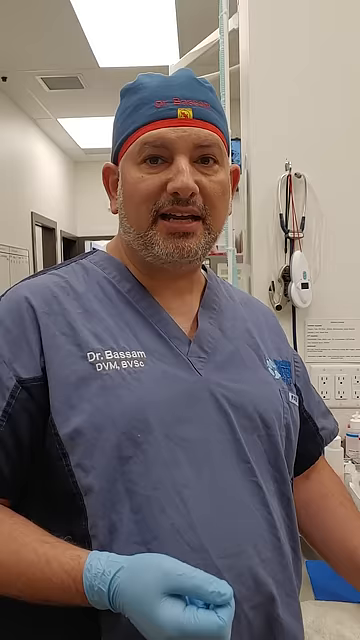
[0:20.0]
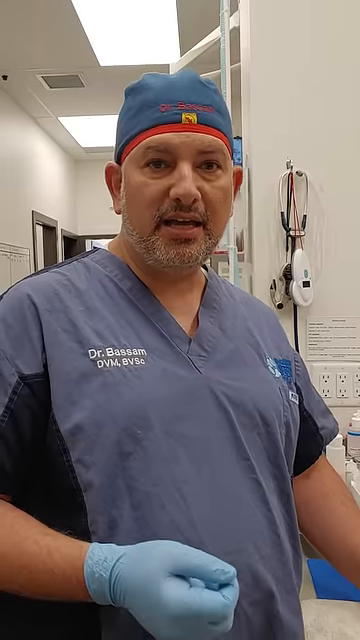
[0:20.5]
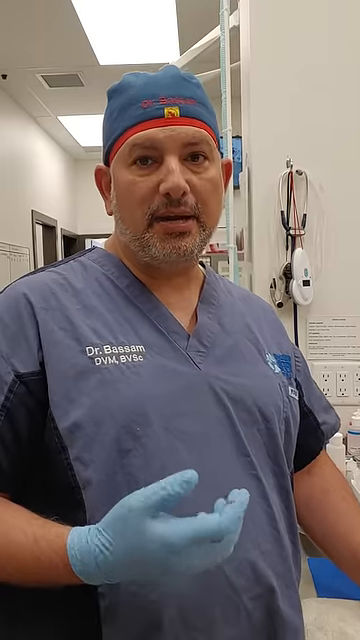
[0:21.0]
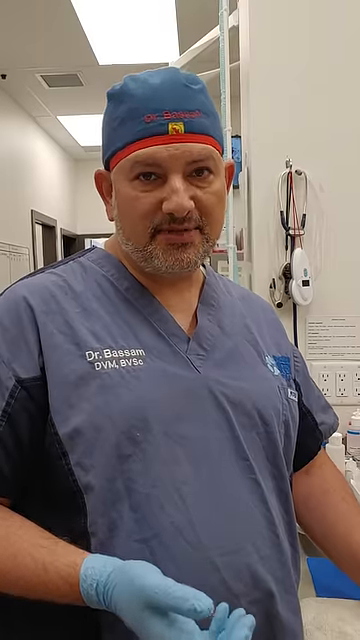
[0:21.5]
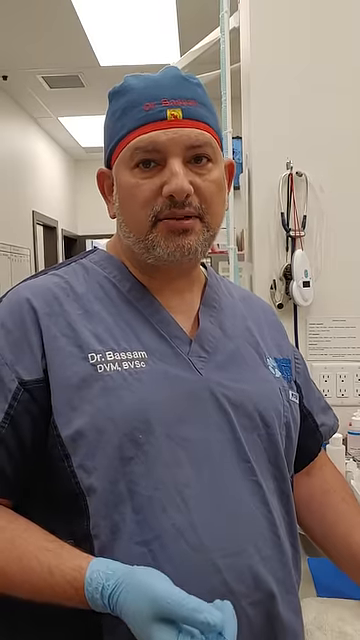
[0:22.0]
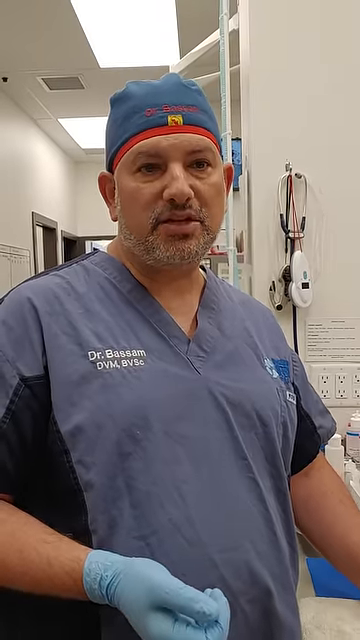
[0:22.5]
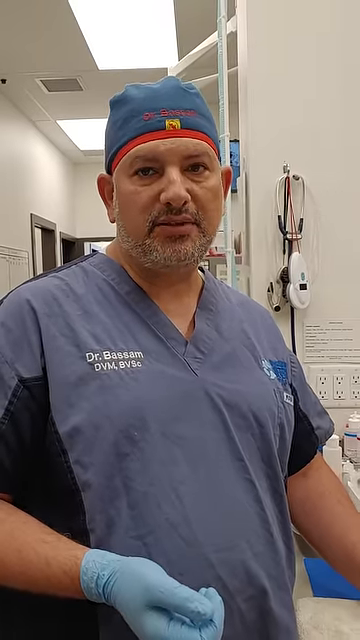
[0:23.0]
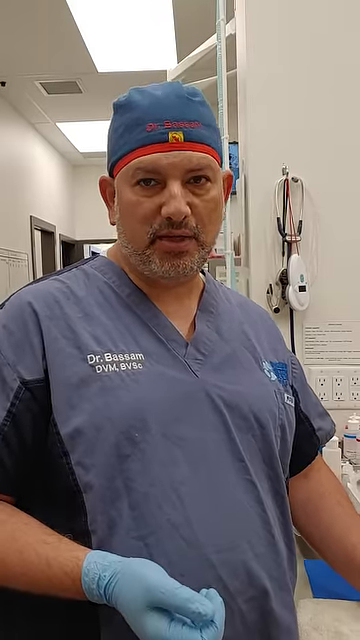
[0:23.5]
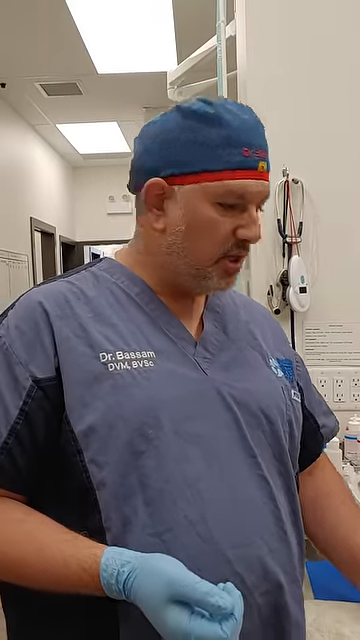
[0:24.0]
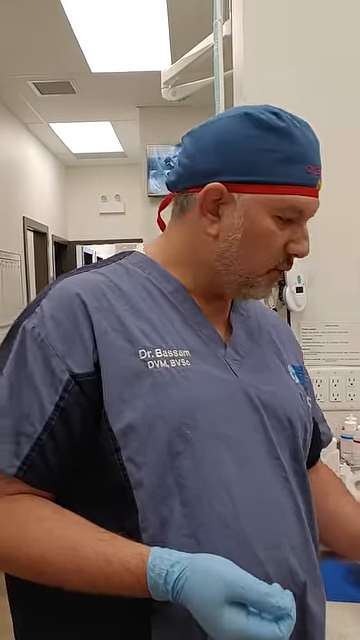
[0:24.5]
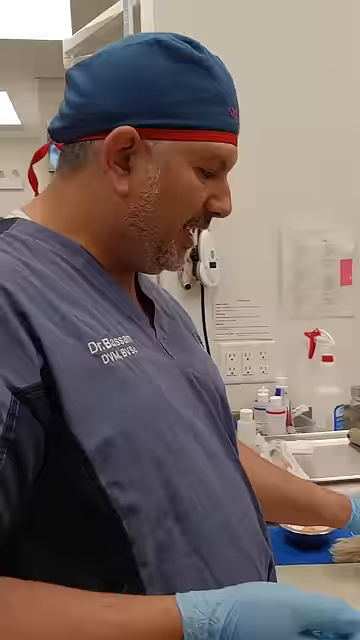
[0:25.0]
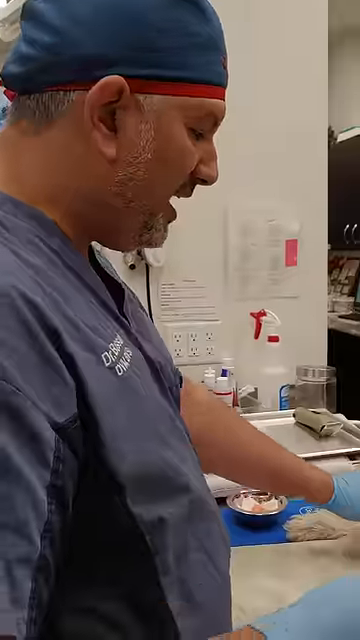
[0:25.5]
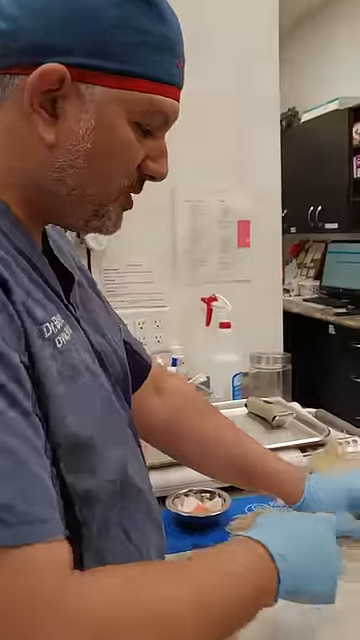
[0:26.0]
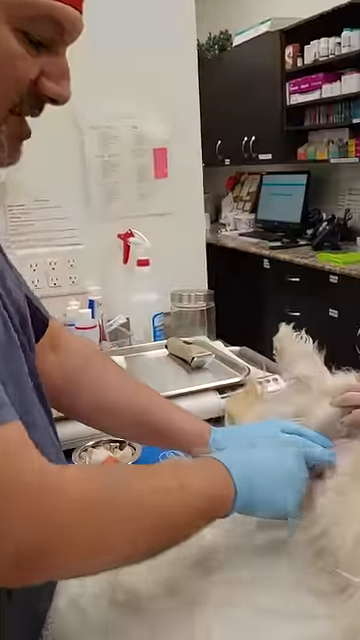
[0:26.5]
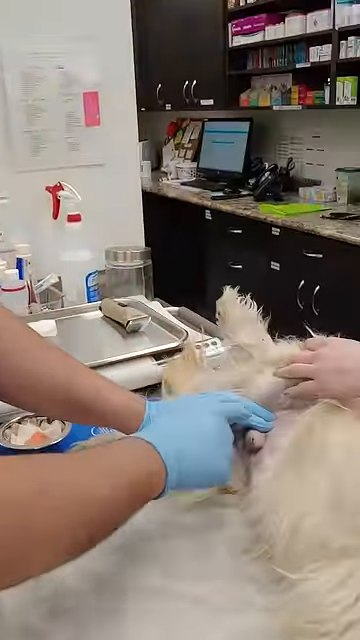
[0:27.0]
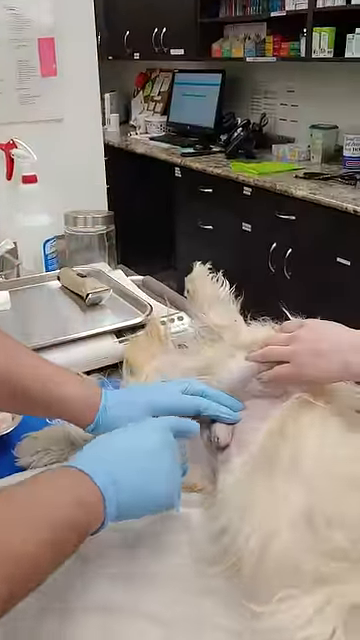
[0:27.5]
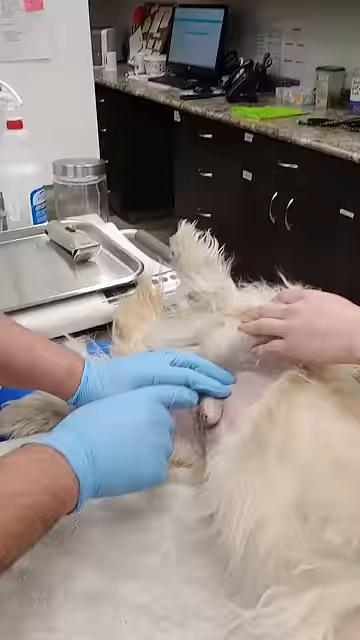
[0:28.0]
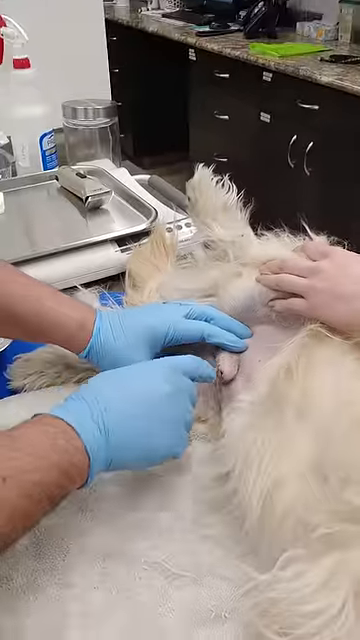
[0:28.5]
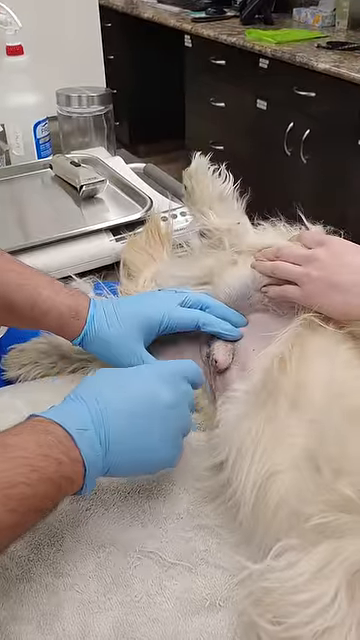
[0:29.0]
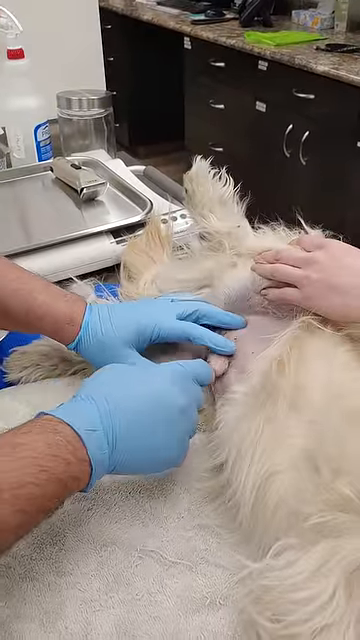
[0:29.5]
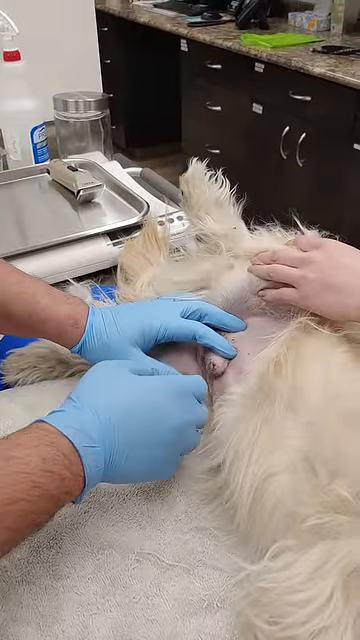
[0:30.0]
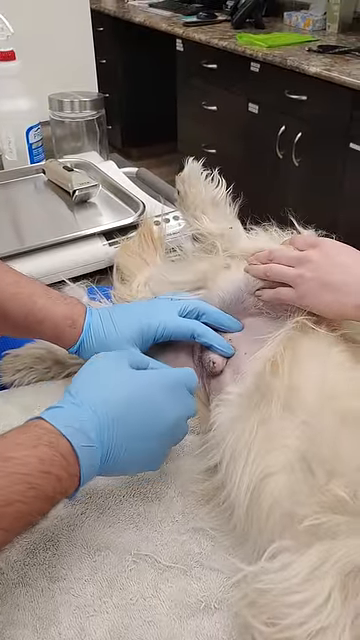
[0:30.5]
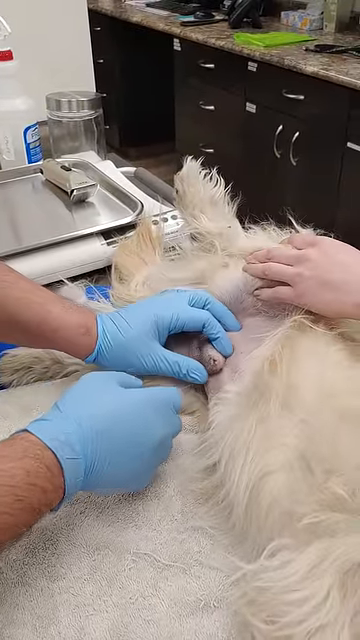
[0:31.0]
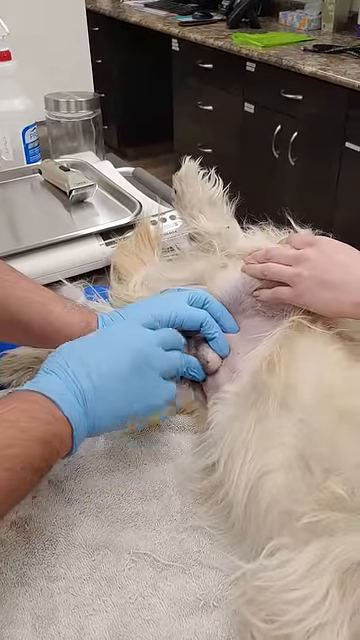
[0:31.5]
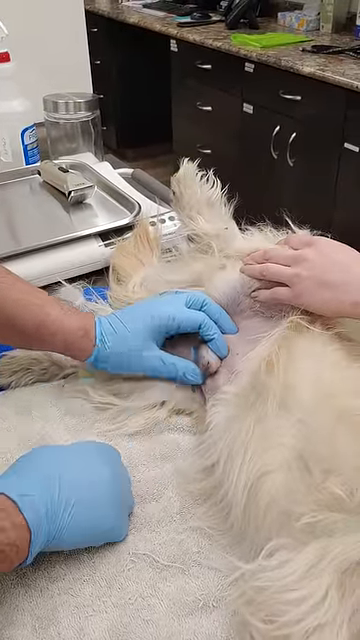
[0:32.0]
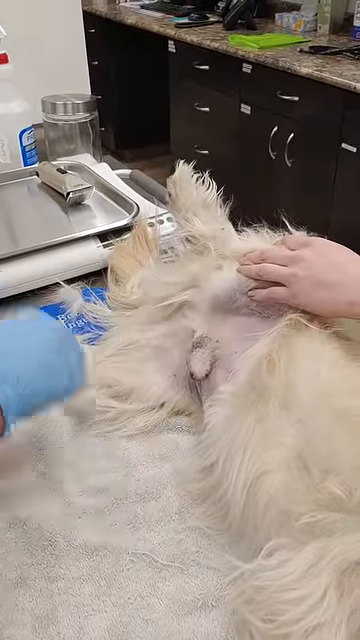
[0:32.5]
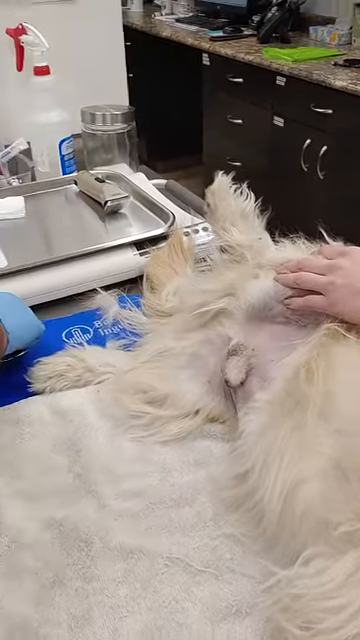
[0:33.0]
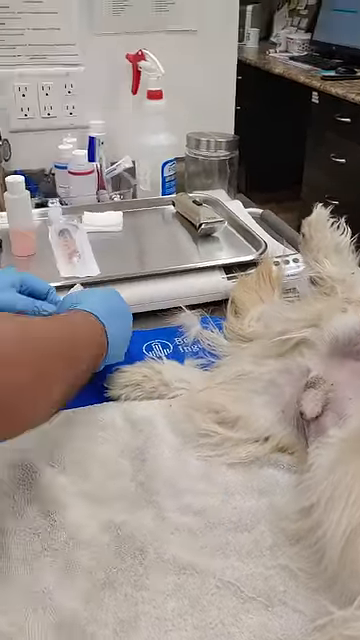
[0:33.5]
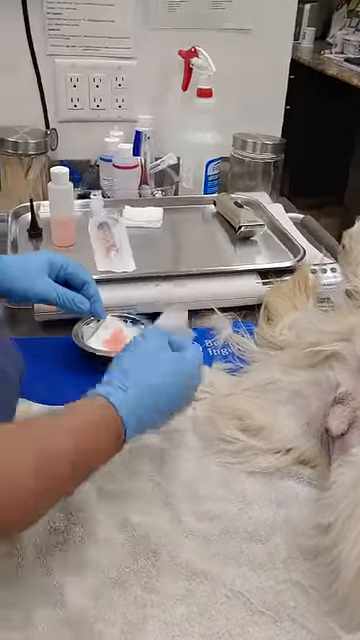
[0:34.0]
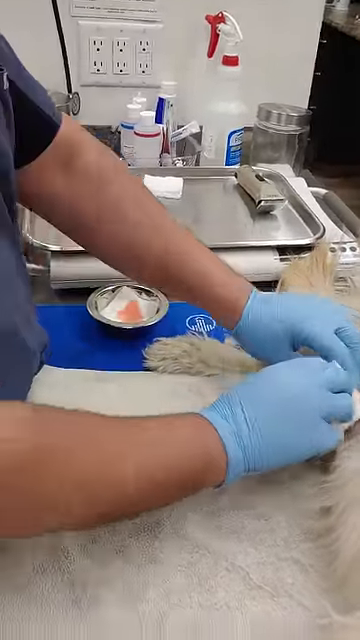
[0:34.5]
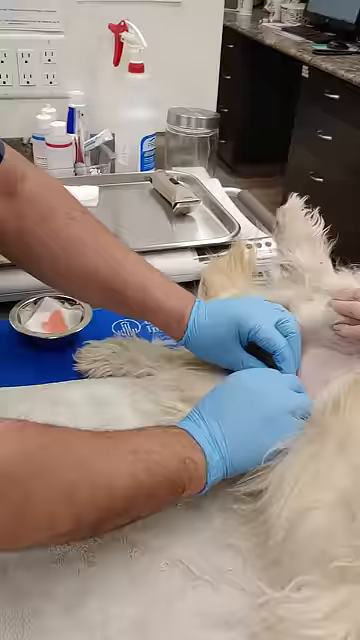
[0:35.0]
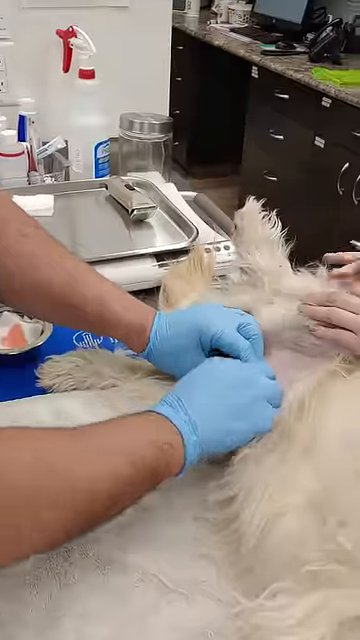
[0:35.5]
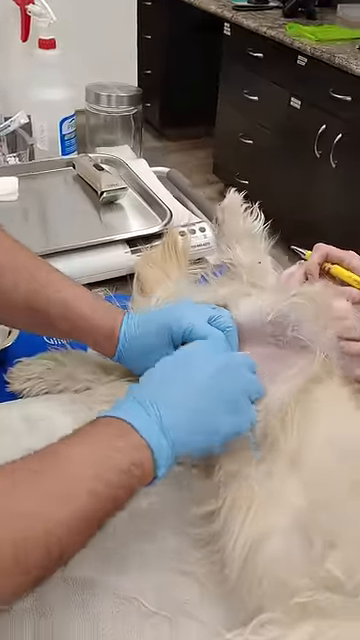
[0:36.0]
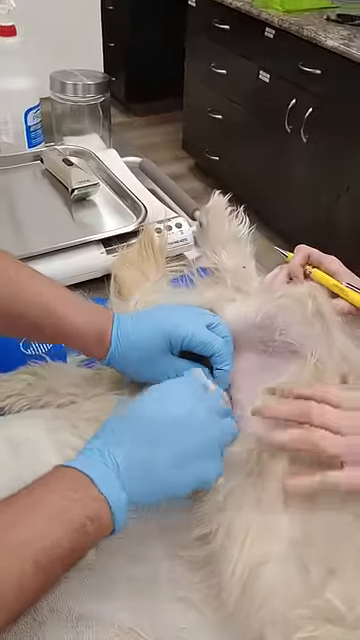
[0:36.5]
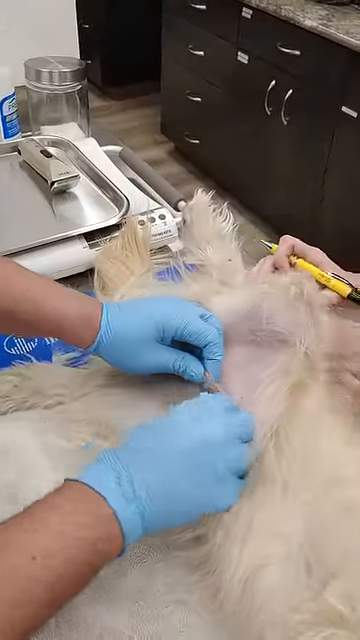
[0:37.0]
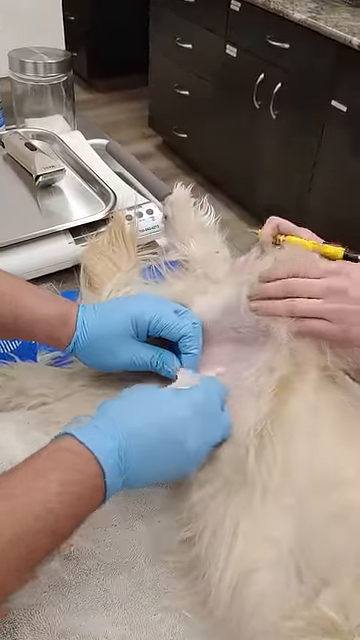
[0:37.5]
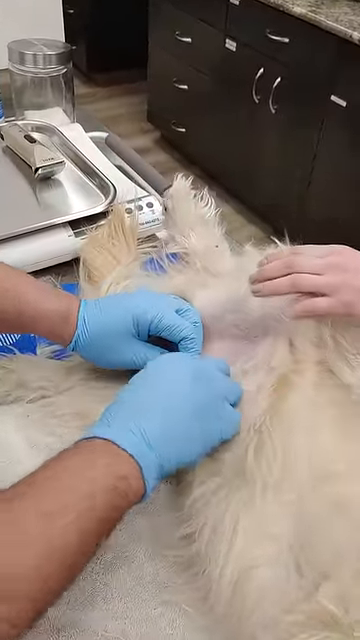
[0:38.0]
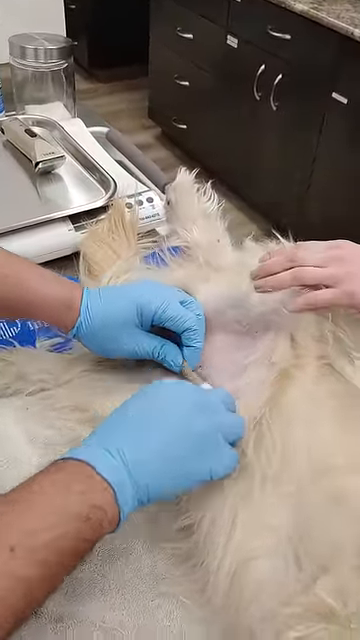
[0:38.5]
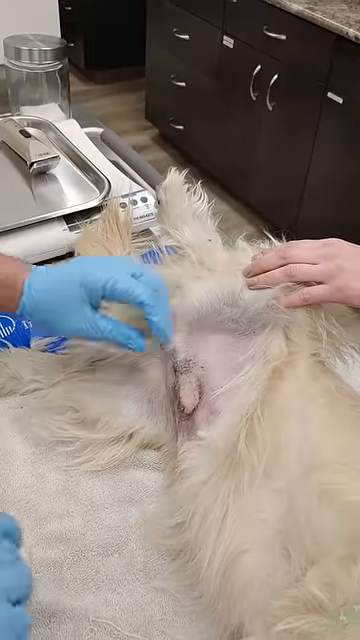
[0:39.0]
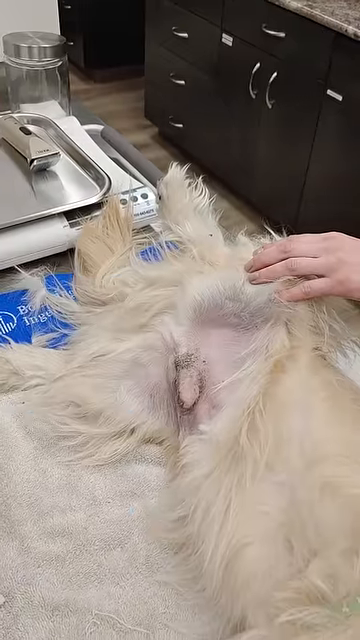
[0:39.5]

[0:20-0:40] The doctor talks to the camera and then shows a dog that is having surgery. He points to the dog's penis area, which he has wiped down thoroughly with a cloth; he is probably a veterinarian. The dog is covered slightly with a papery blanket for the surgery, and the area has been shaved. Another person's hands are visible, an assistant whose hands look similar to a female's. She holds a pencil, maybe taking notes or writing something down. They are probably getting ready to operate on the dog.